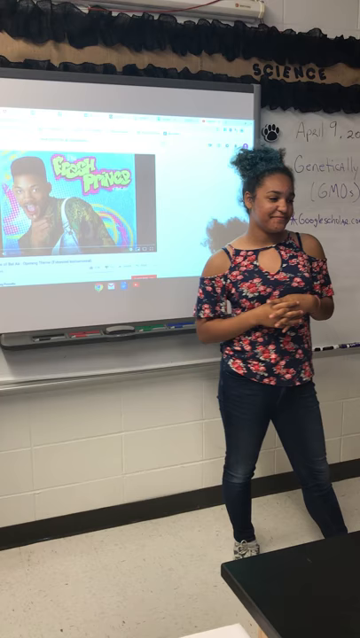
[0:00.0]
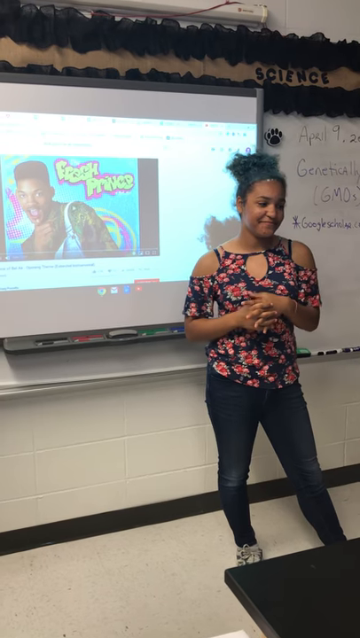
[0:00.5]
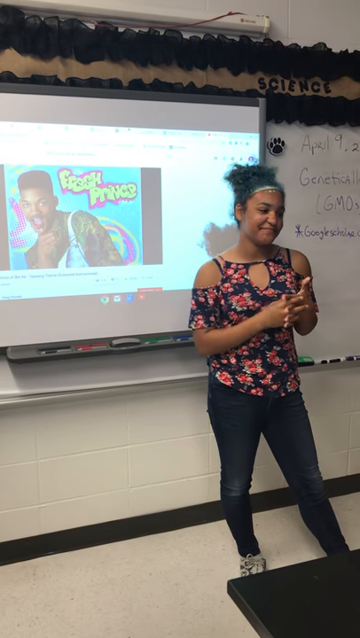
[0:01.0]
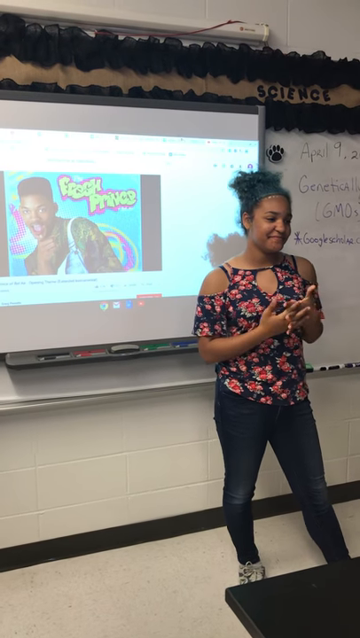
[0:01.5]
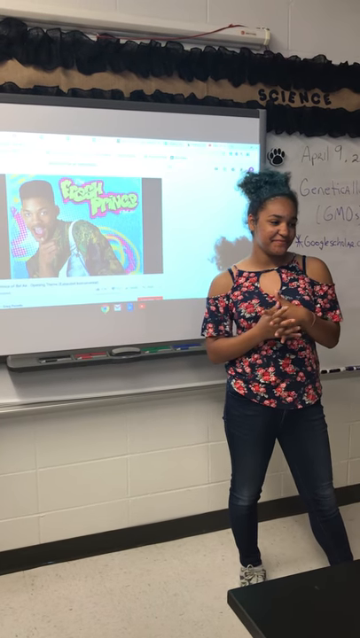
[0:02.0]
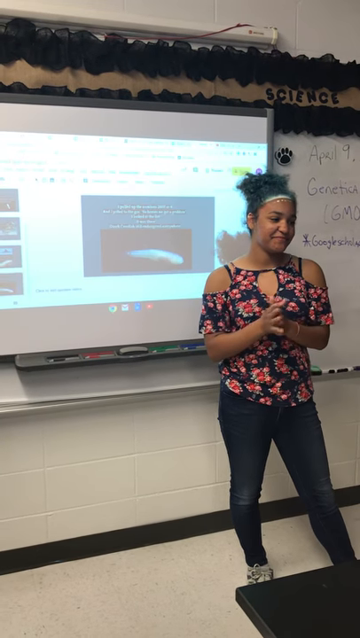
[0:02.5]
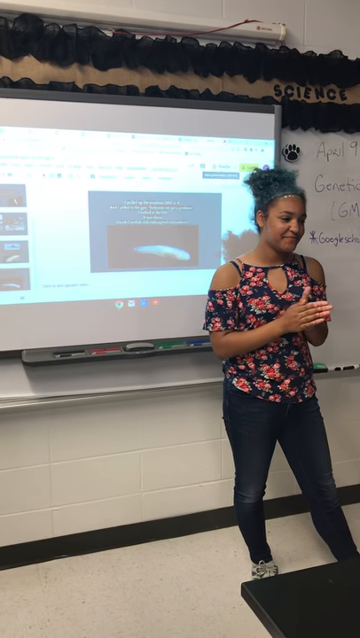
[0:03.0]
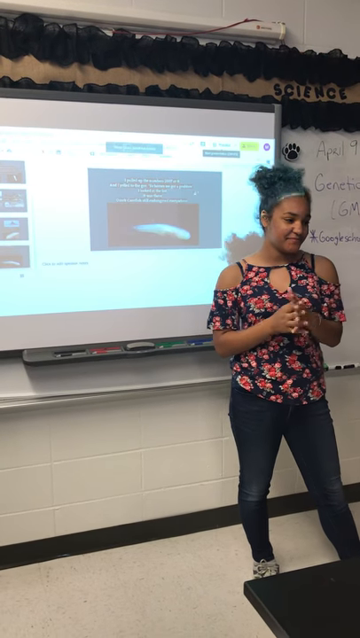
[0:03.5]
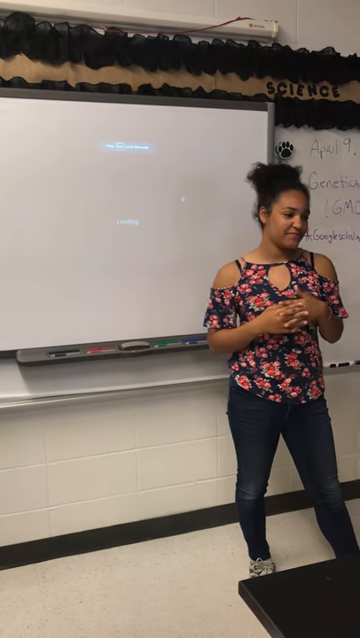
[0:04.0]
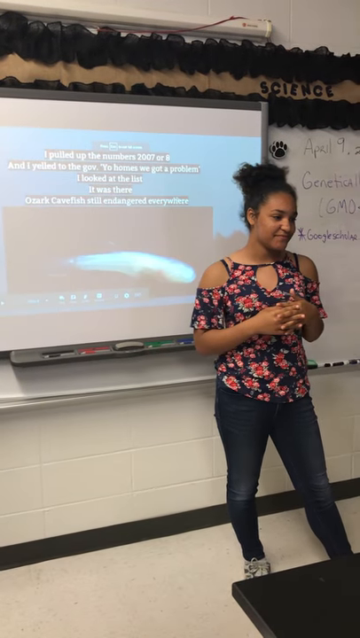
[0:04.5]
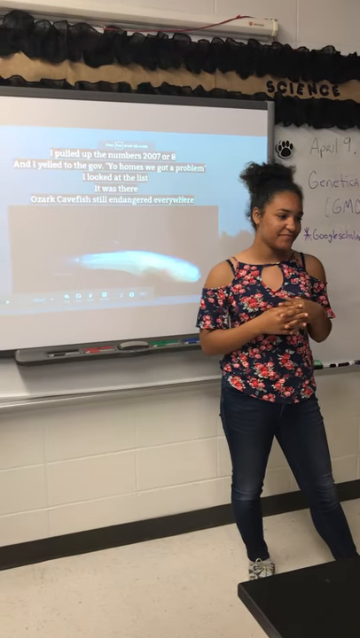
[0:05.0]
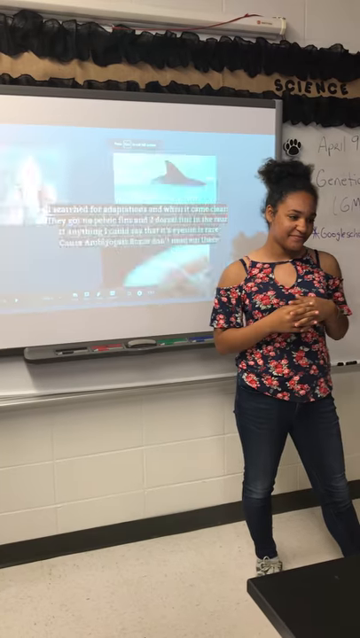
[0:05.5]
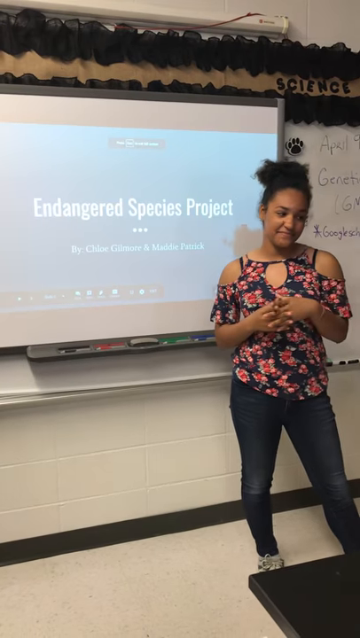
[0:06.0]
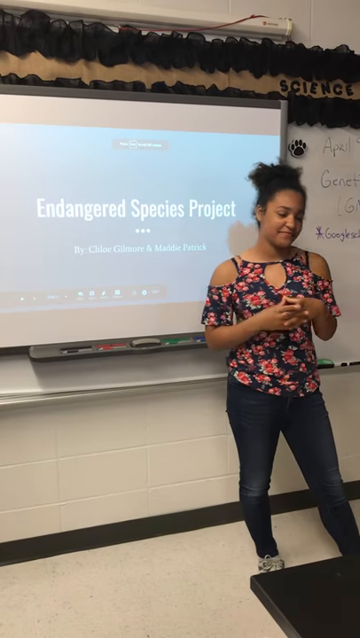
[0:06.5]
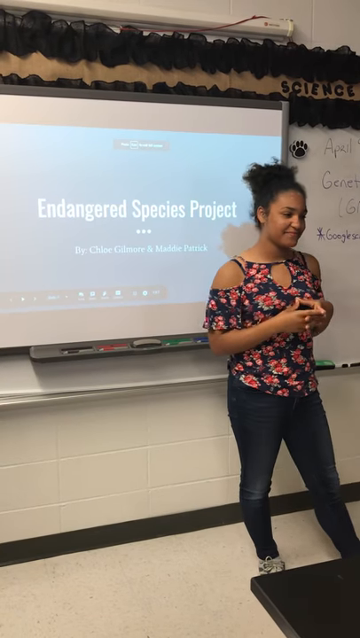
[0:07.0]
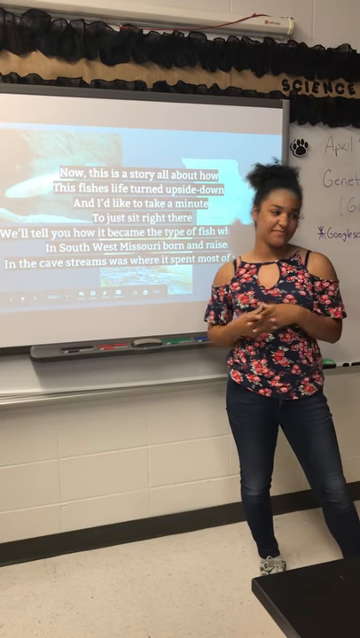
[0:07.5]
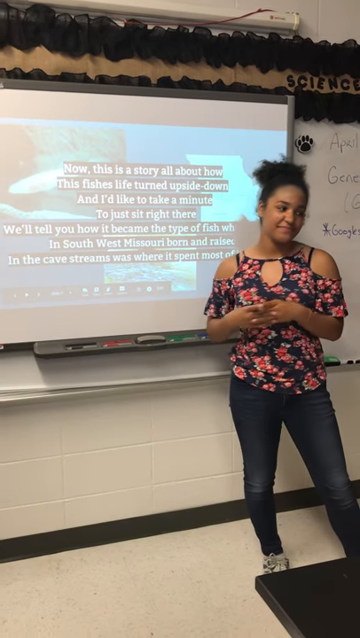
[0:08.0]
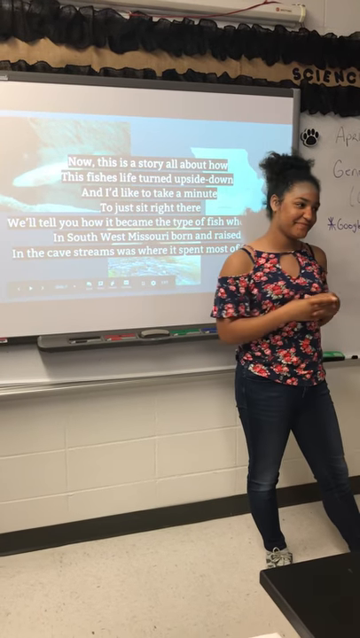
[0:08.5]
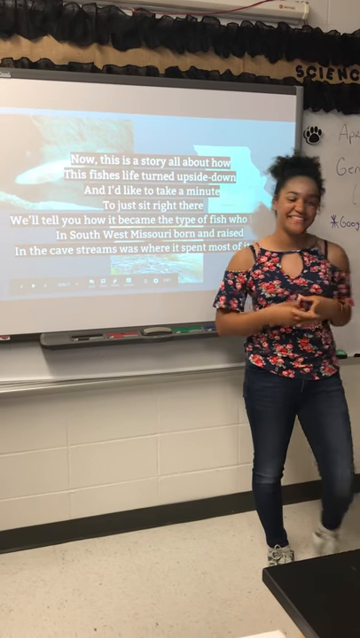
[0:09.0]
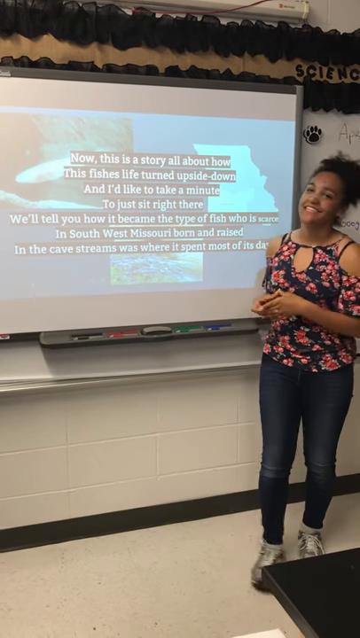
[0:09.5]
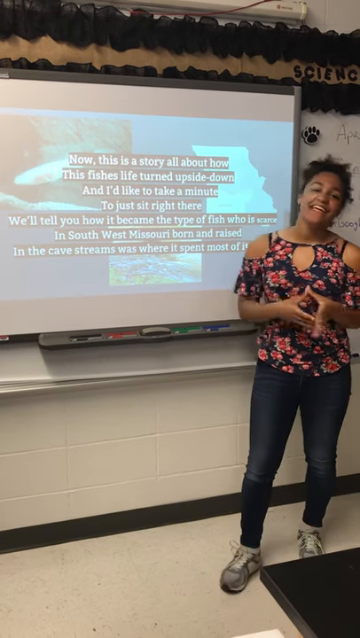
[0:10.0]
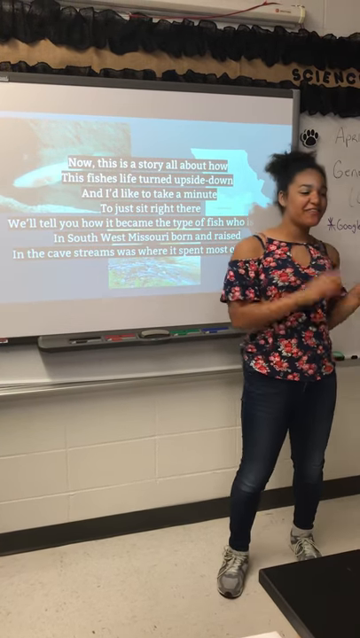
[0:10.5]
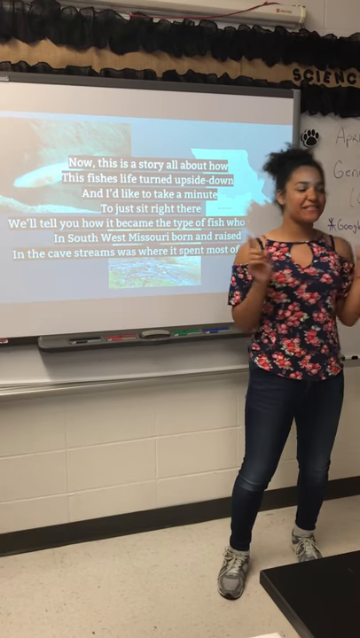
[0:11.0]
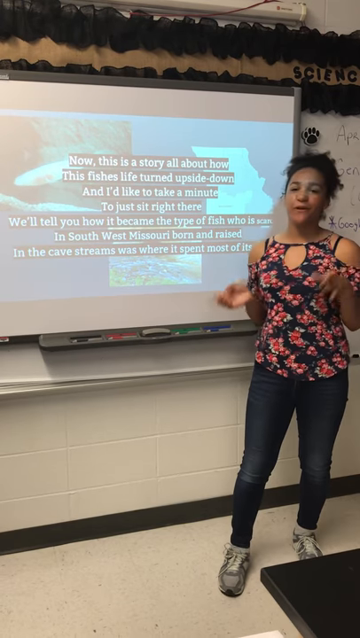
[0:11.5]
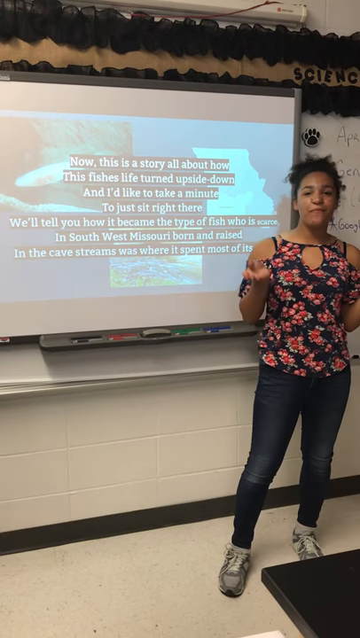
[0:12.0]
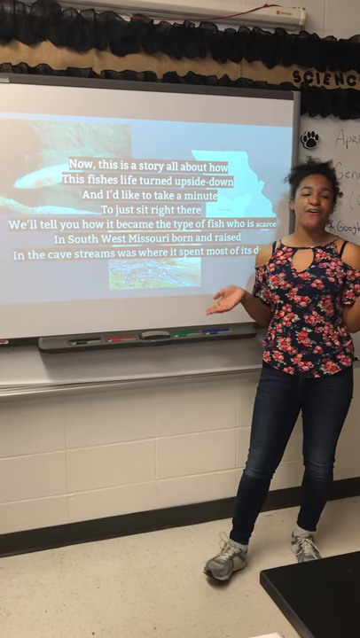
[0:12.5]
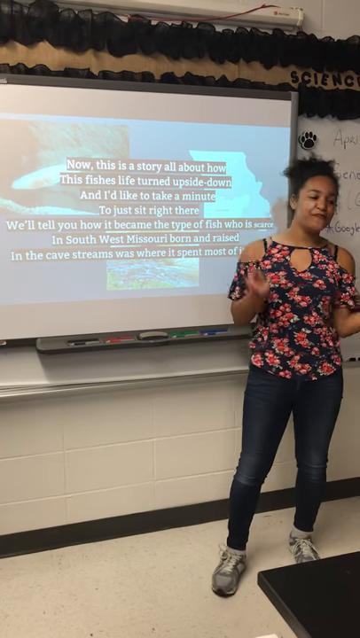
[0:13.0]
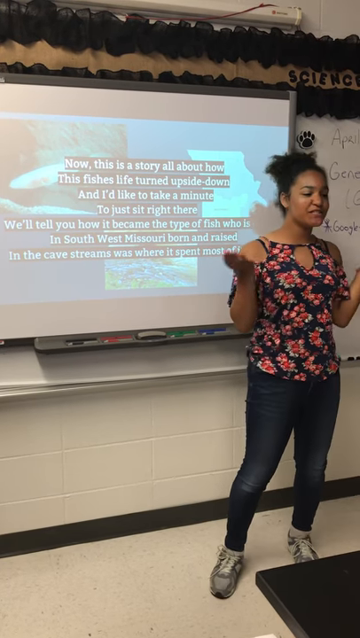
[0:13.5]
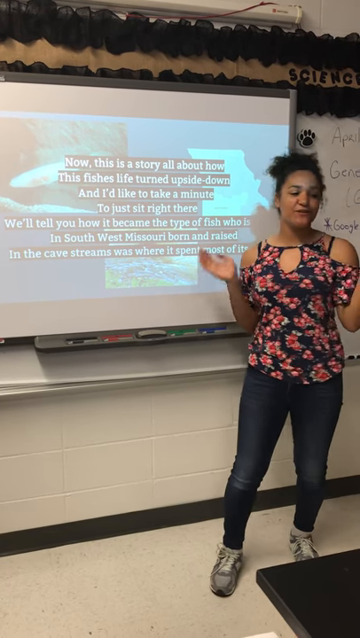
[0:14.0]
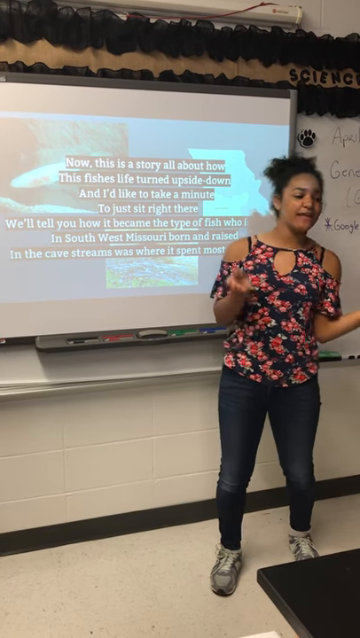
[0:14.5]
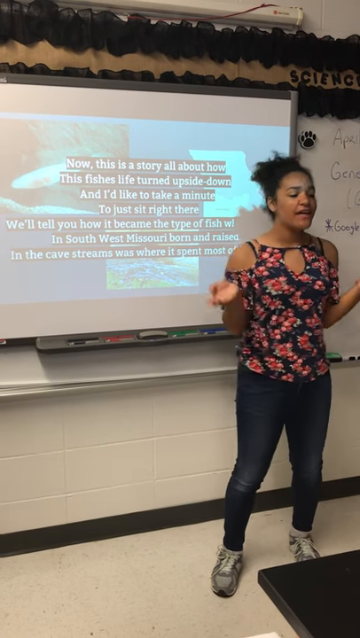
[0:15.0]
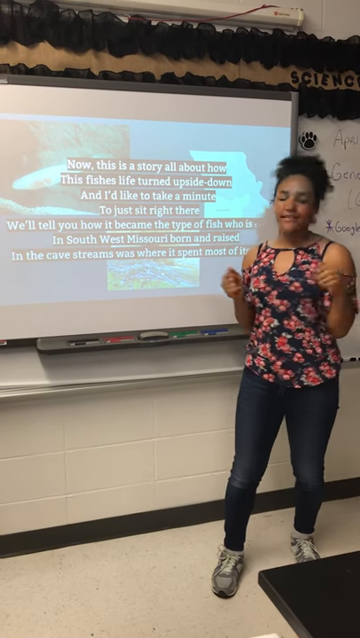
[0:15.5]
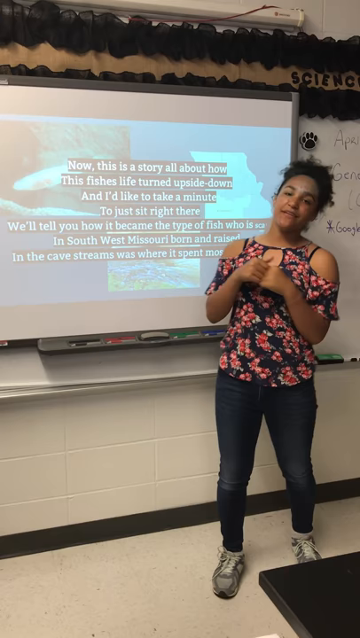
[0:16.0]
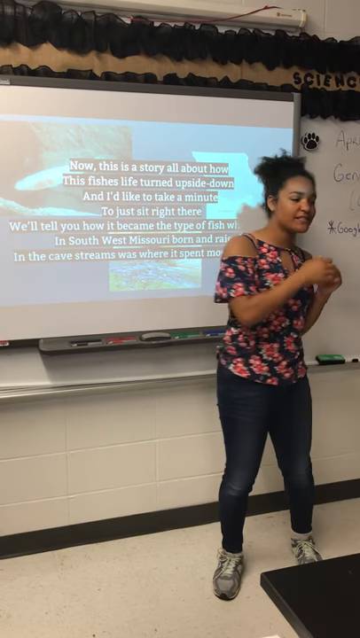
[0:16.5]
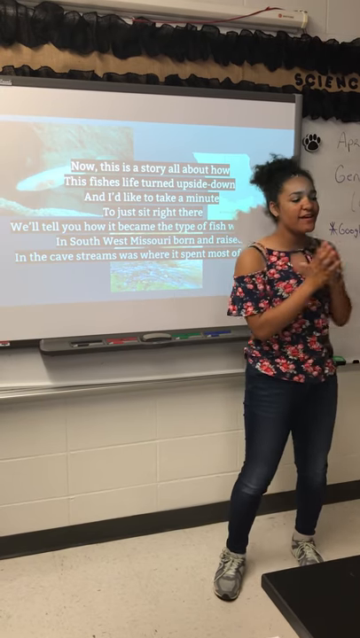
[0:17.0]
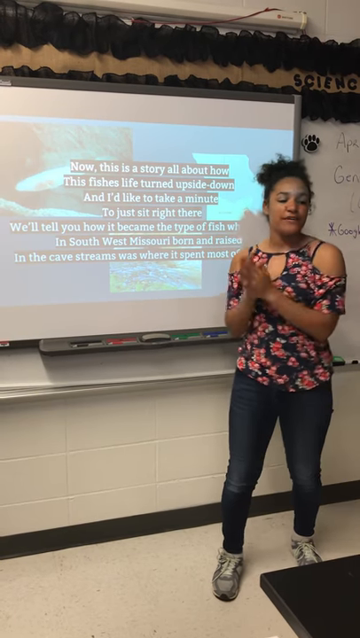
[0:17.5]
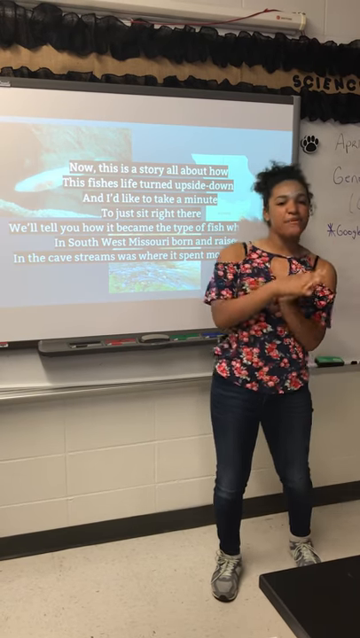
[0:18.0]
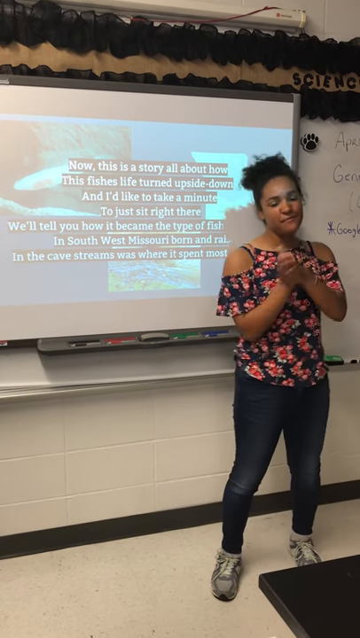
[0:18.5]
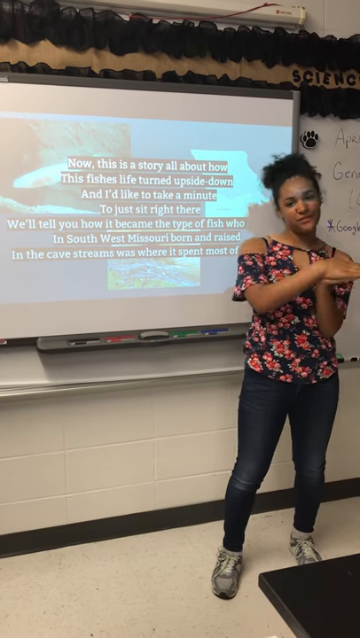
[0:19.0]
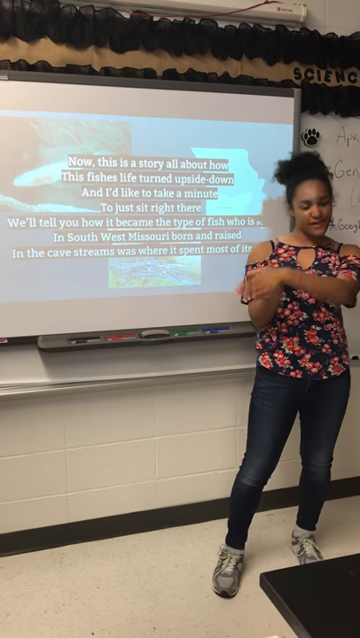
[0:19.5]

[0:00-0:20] The main subject is a teacher who looks to be of African-American descent and relatively young, probably around 30 years old. She teaches from a projector screen about the French Prince of Bel-Air, and the content on the screen is the only thing that changes. The setting is a classroom that stays the same; it looks like a science or biology class, with the material covering genetics and GMOs. She speaks to the students, smiling and trying to engage them. She wears a flower shirt with jeans and a pair of sneakers, and her hair is tied up. "Science" is on the wall. The date seems to be April 9th. She is the only person in the frame, and the school looks like a high school.